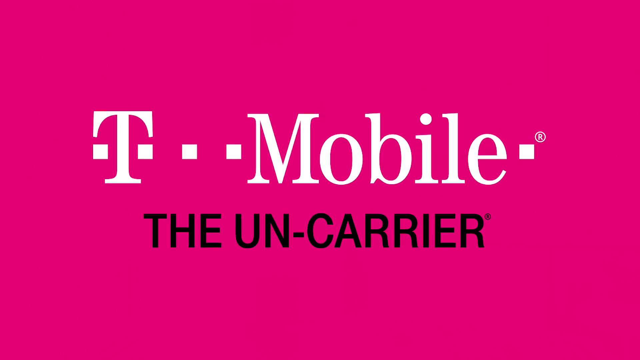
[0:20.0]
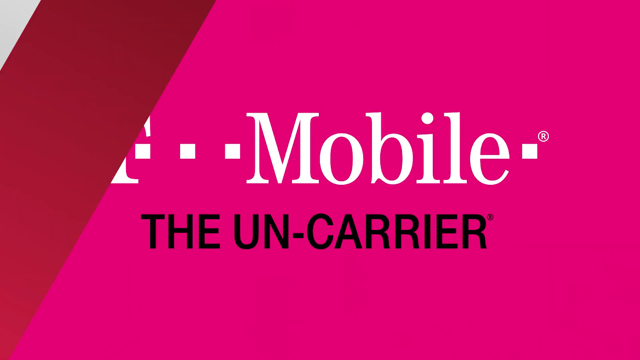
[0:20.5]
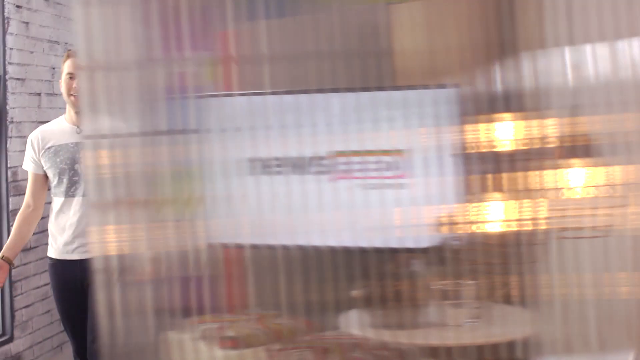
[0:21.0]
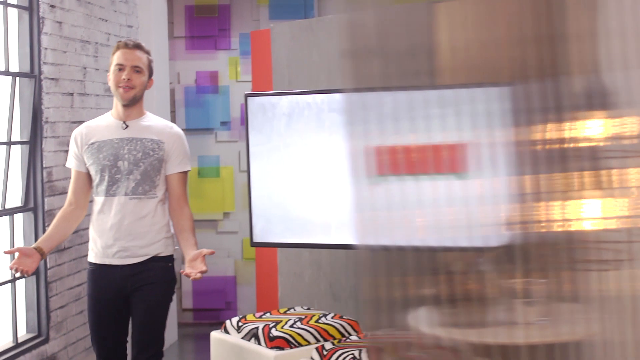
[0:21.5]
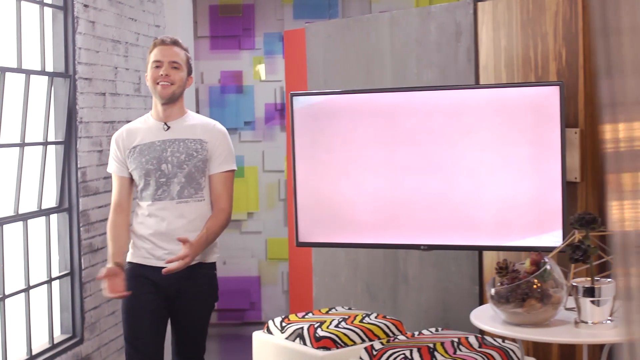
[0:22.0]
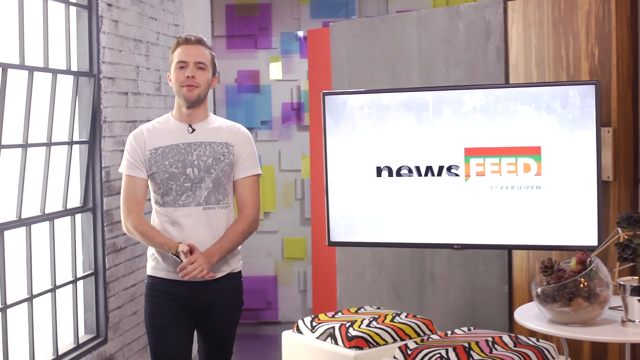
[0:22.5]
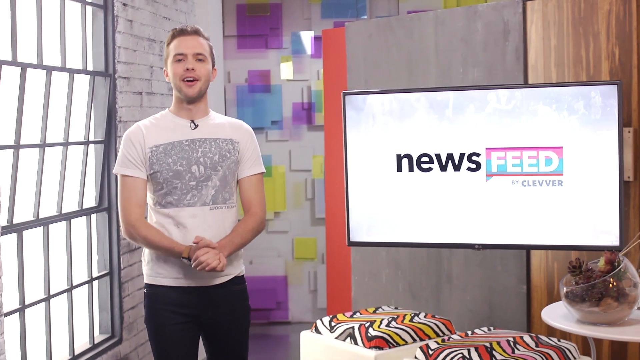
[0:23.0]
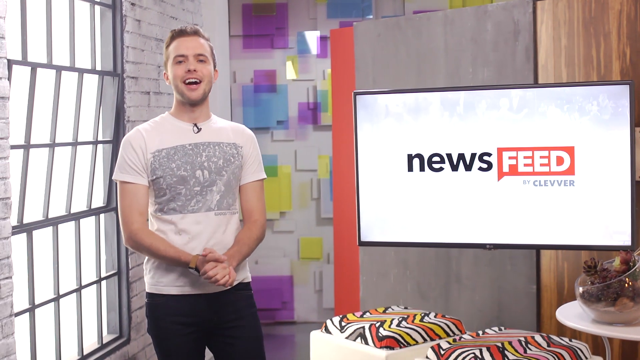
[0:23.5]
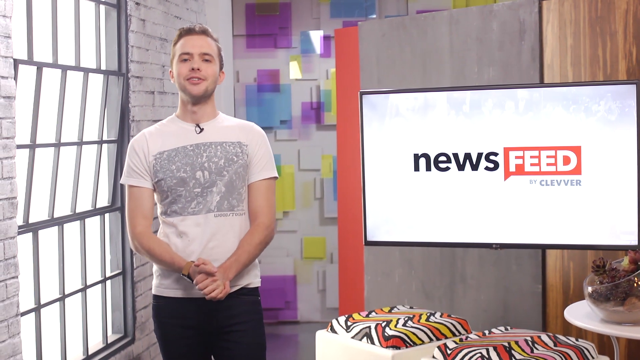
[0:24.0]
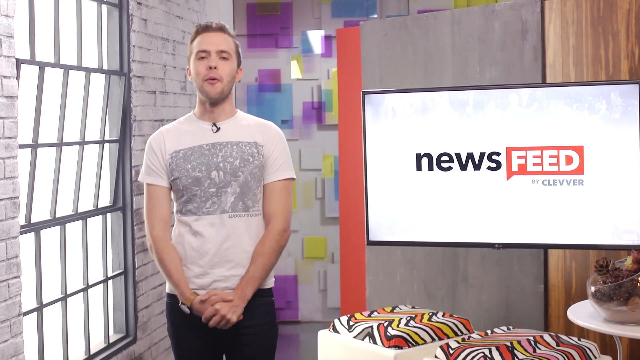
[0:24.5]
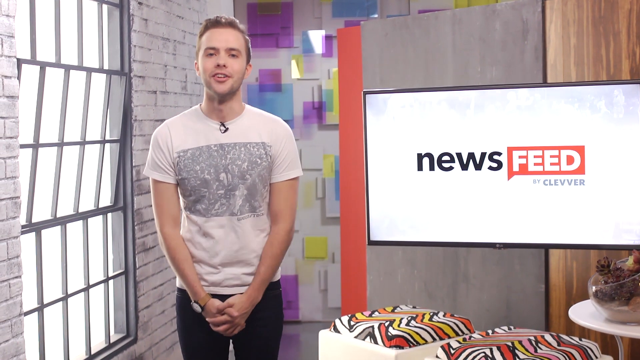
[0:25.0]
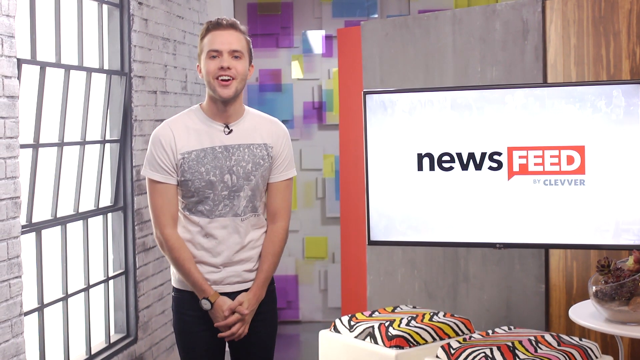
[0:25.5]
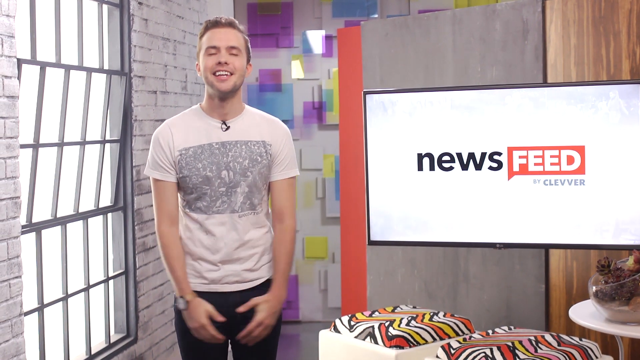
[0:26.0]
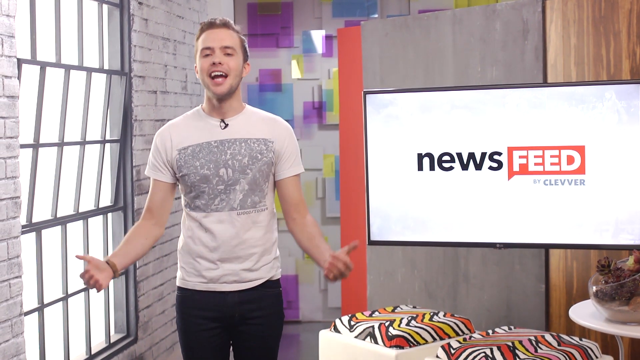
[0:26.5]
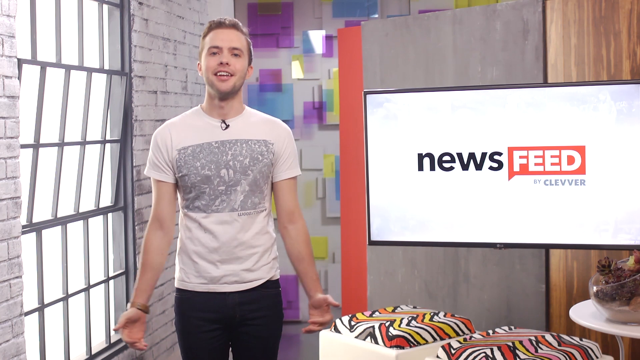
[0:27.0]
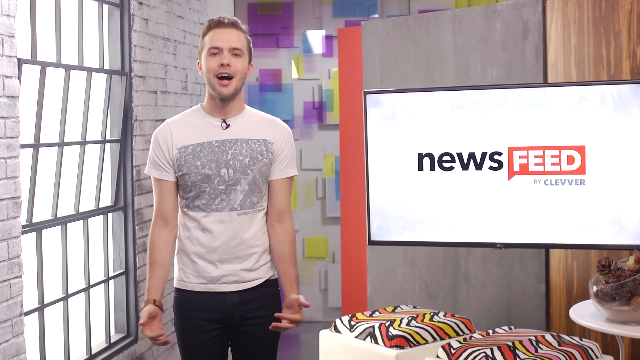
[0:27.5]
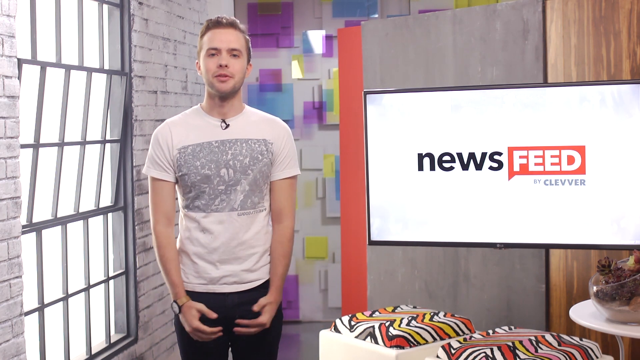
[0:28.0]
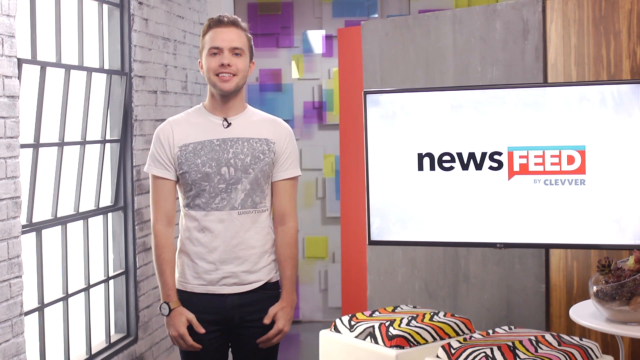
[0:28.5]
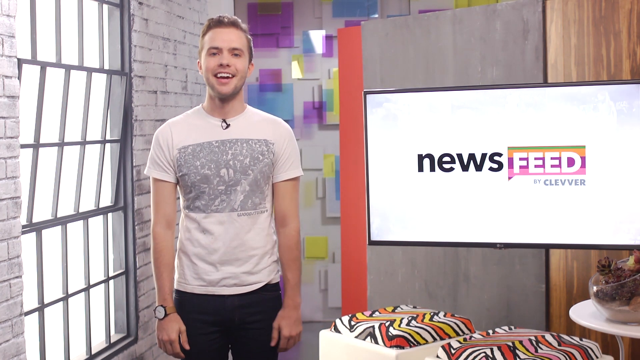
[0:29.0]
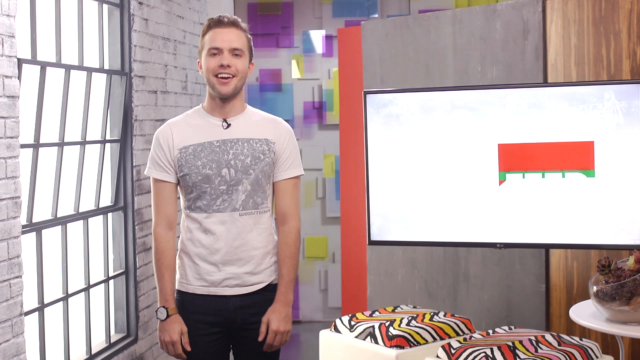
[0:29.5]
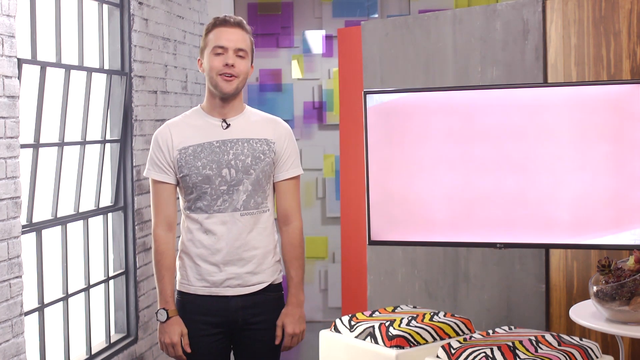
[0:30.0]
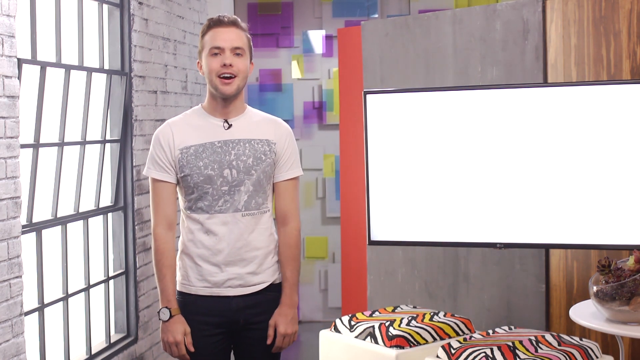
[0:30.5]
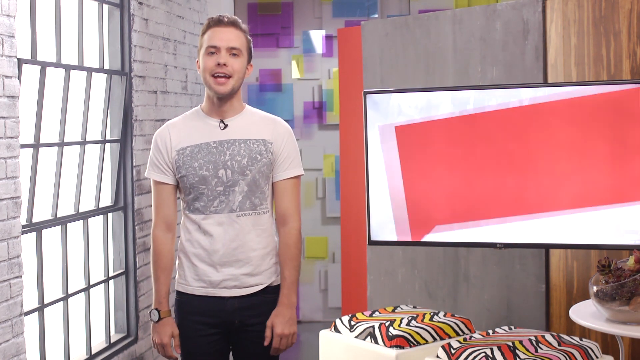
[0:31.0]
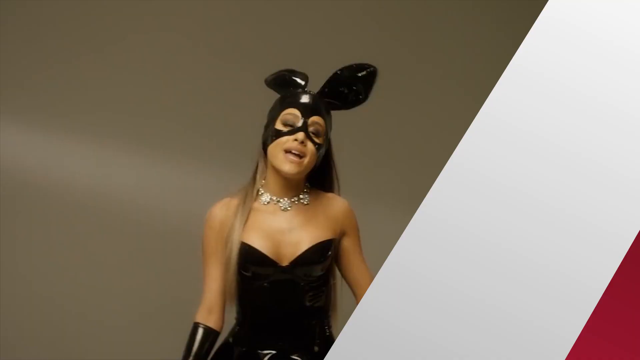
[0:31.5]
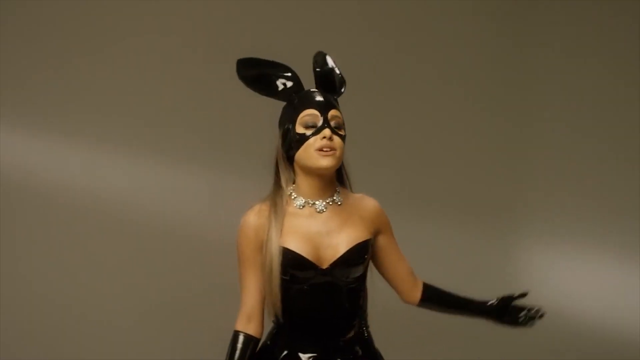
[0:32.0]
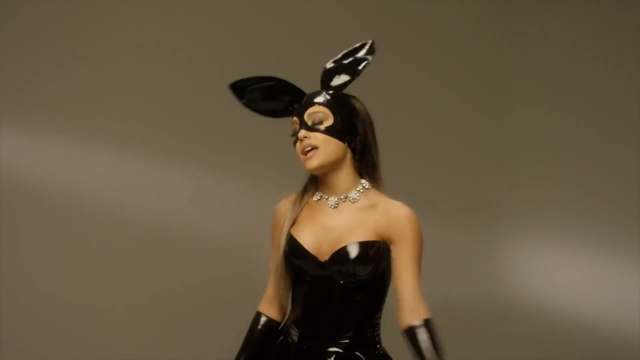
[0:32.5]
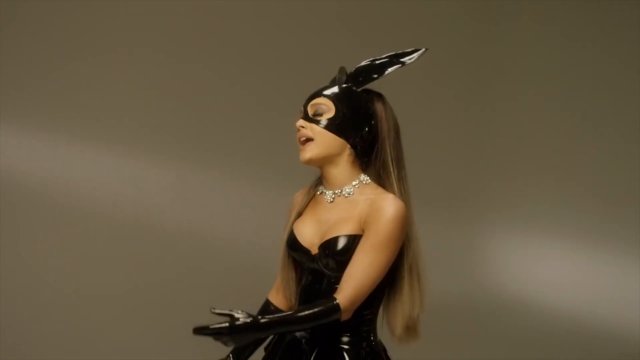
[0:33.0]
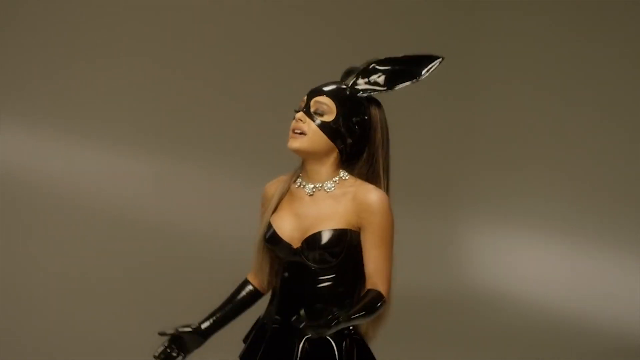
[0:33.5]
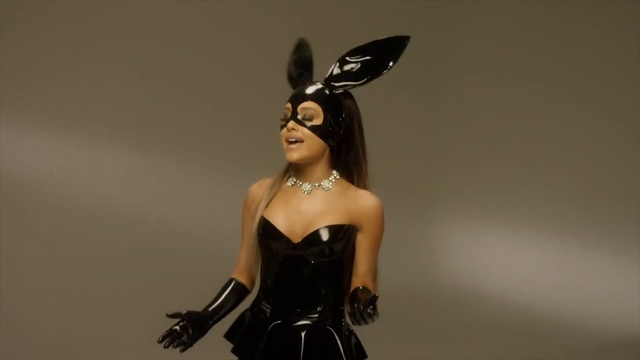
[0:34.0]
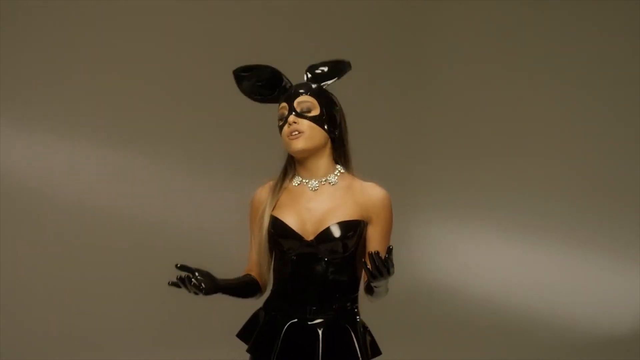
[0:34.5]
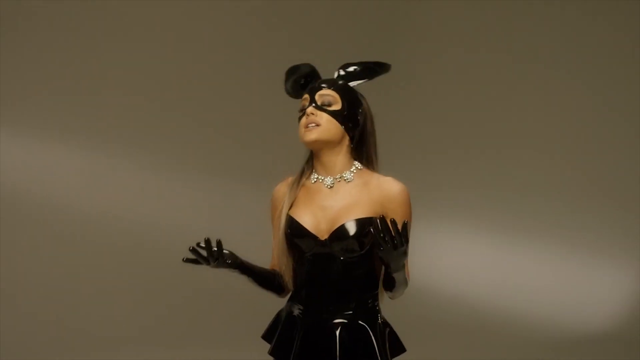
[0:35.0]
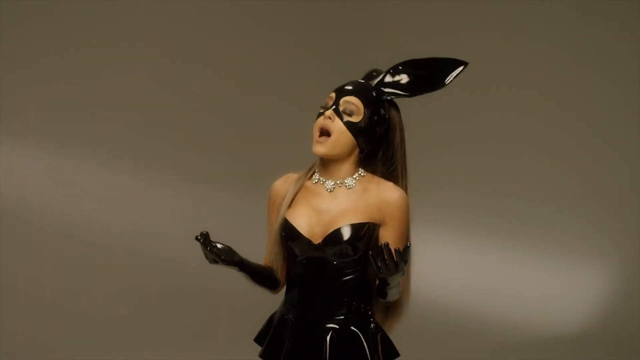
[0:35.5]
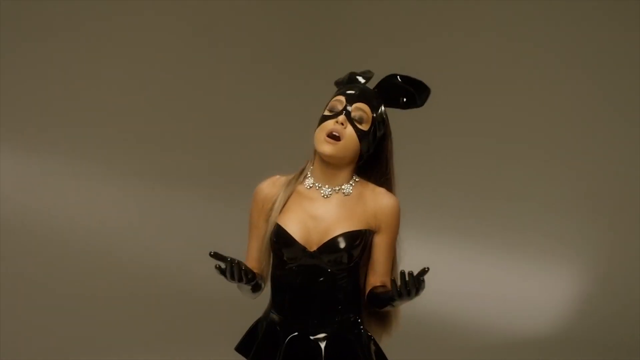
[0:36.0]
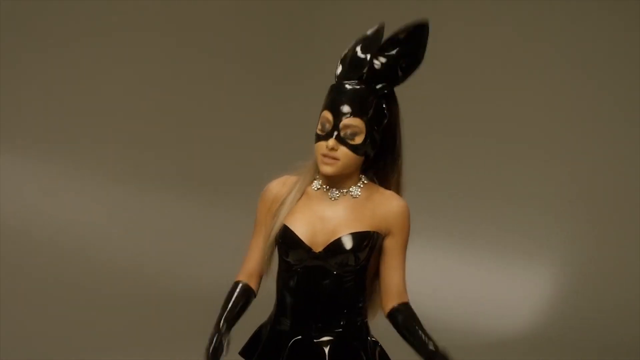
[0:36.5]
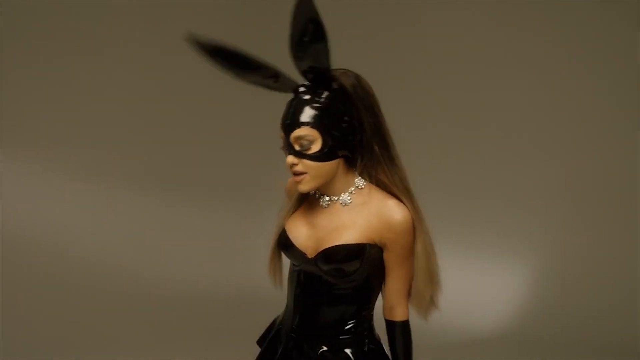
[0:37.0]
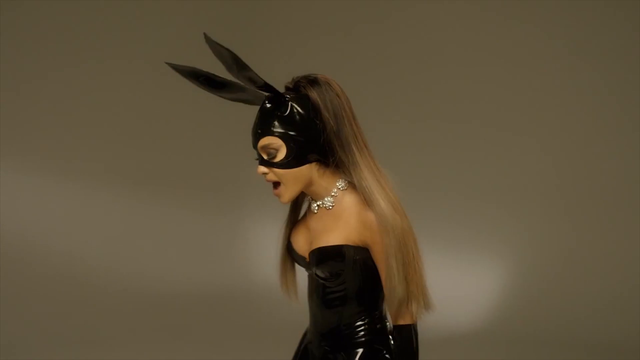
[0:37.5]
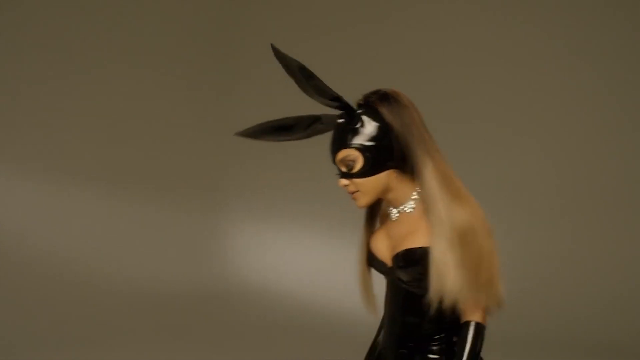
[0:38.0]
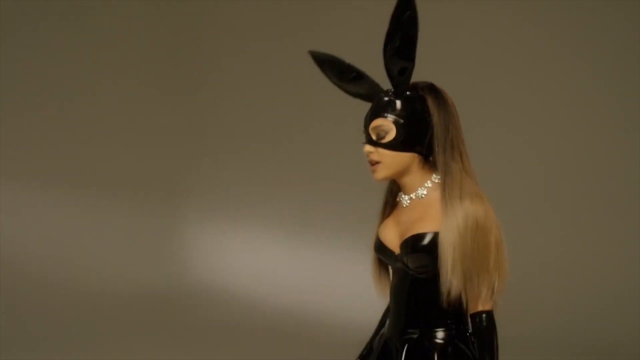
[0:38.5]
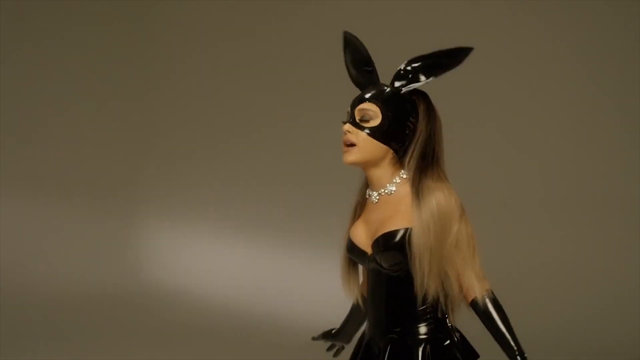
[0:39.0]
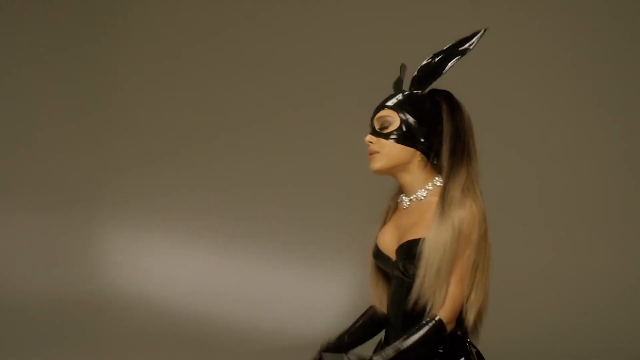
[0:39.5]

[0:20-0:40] The T-Mobile logo appears: a T with a small white square to its left and right, followed by more squares and the word "mobile", then one more white square. Below it, in slightly smaller black text, it reads "the un-carrier". The scene cuts to a well-lit, apartment-style indoor room with white brick walls on the left and a three-paned window on the left; each of the large panes is divided into 10 smaller ones. A man stands on the left of the frame, wearing a white t-shirt with a black-and-white graphic design. He is Caucasian, slim, perhaps in his mid-20s, with brown hair, beard and mustache. To his right is a TV monitor showing the word "news" in black text and "feed" in white text on a red background, with "by Clevver" beneath in small gray letters.